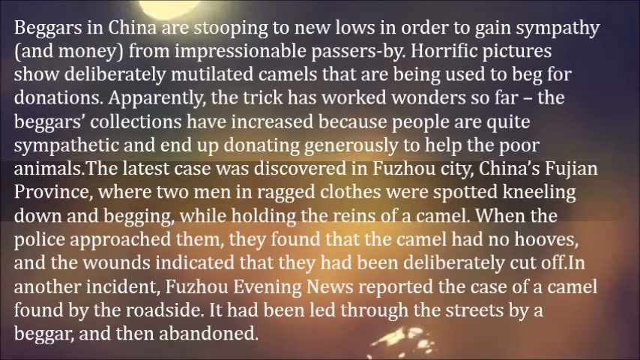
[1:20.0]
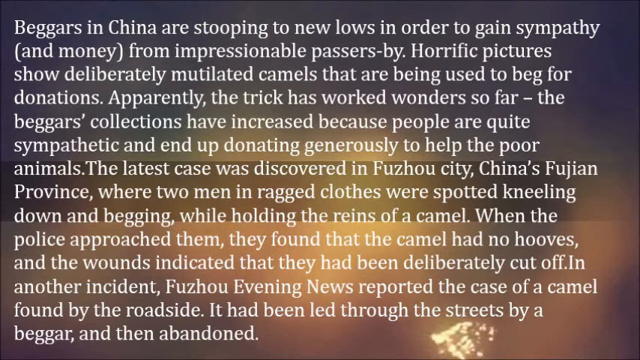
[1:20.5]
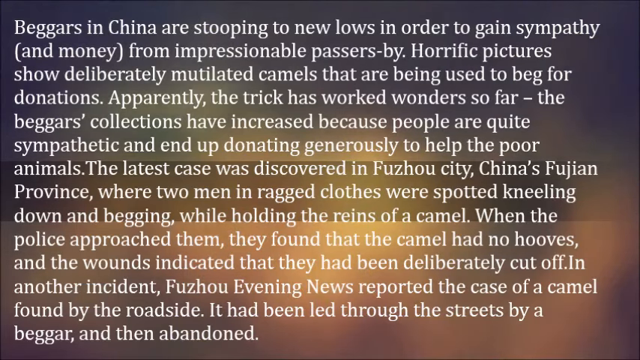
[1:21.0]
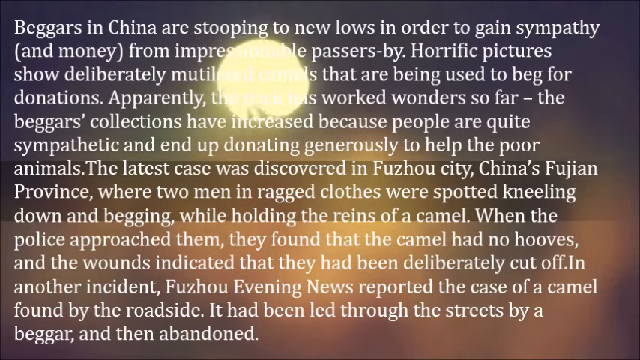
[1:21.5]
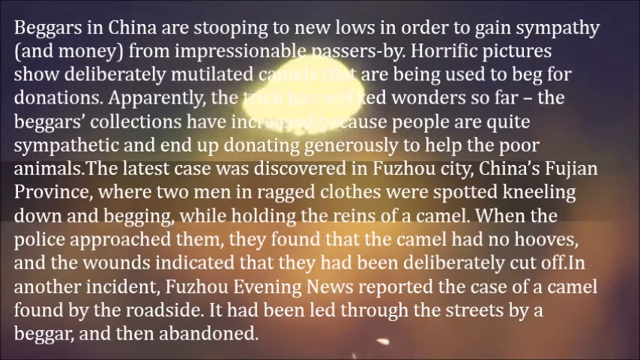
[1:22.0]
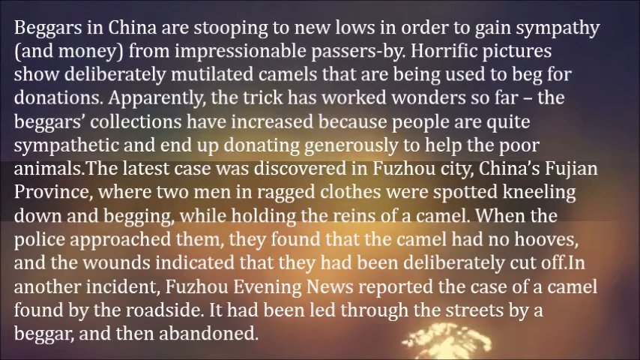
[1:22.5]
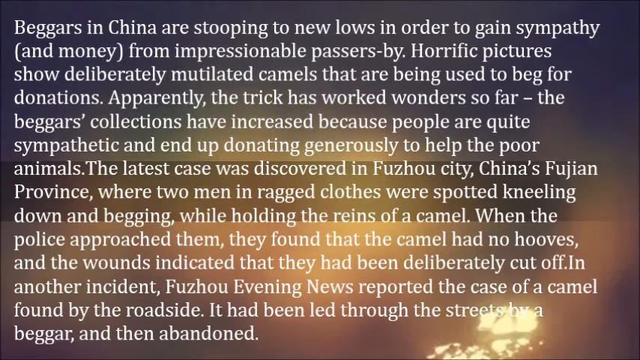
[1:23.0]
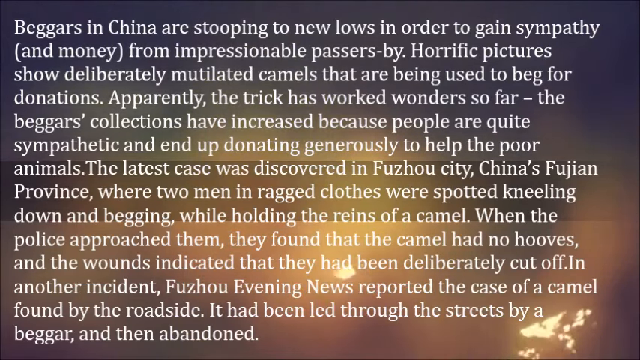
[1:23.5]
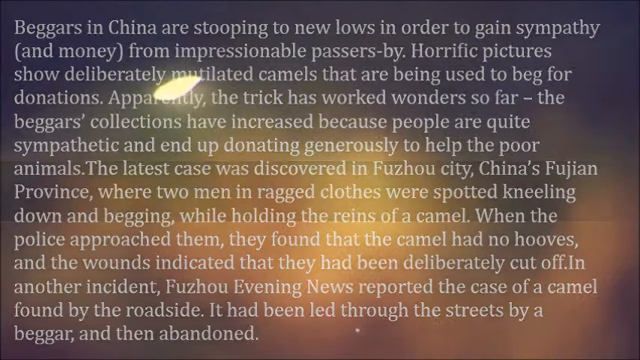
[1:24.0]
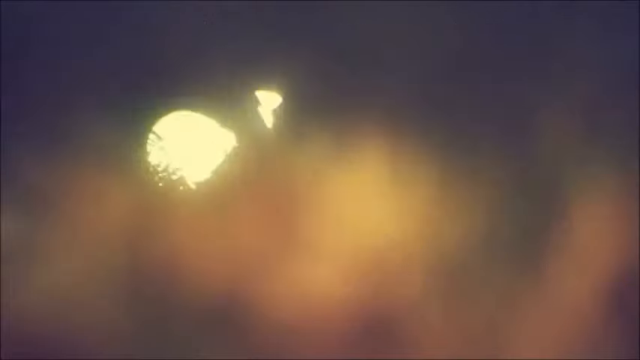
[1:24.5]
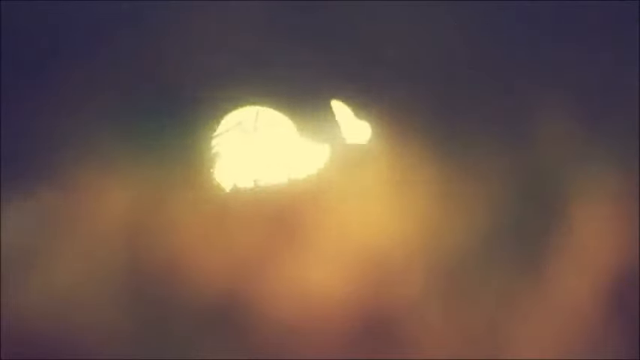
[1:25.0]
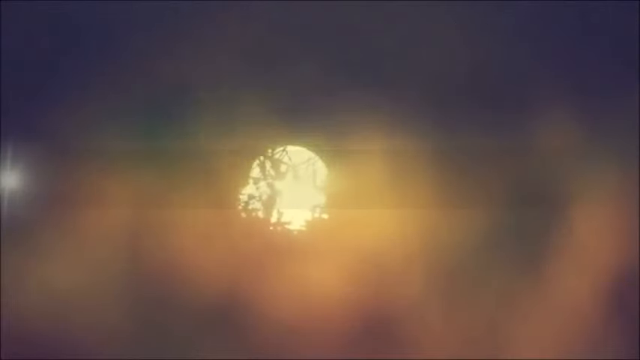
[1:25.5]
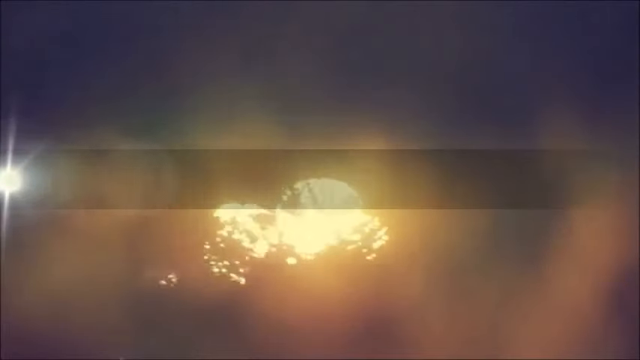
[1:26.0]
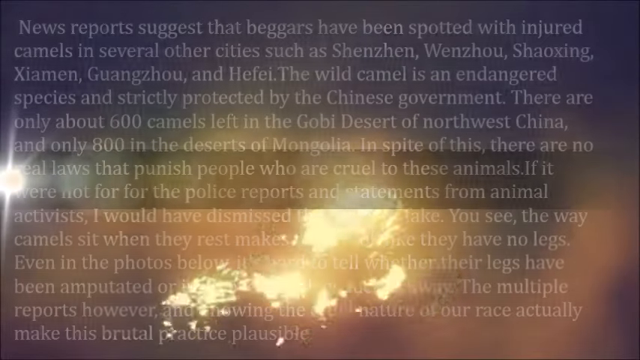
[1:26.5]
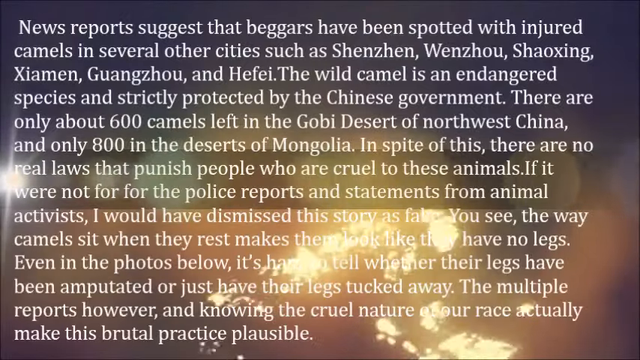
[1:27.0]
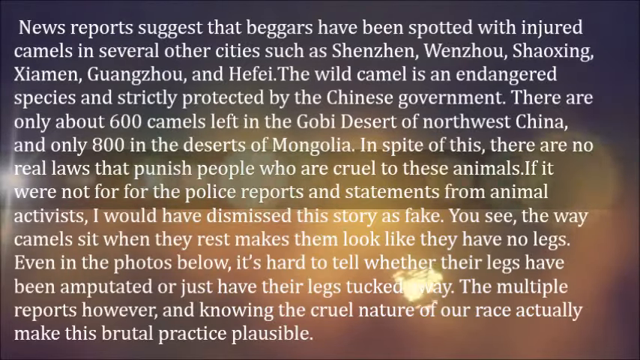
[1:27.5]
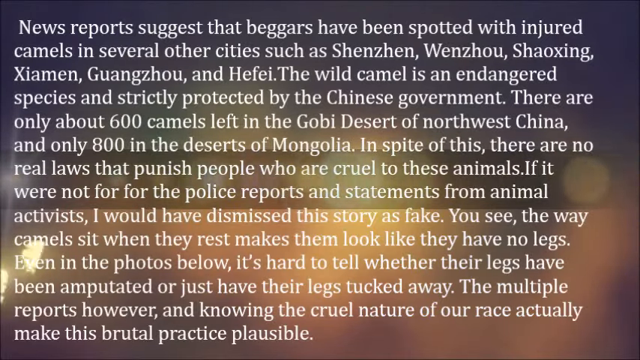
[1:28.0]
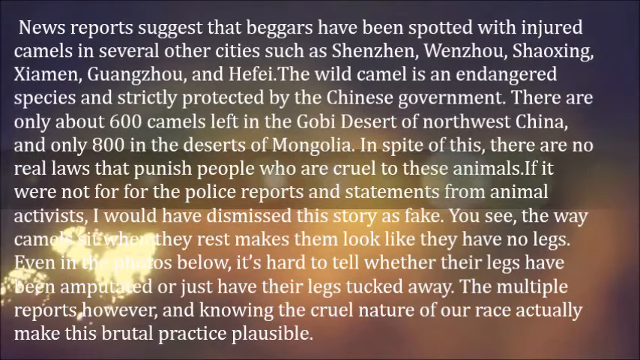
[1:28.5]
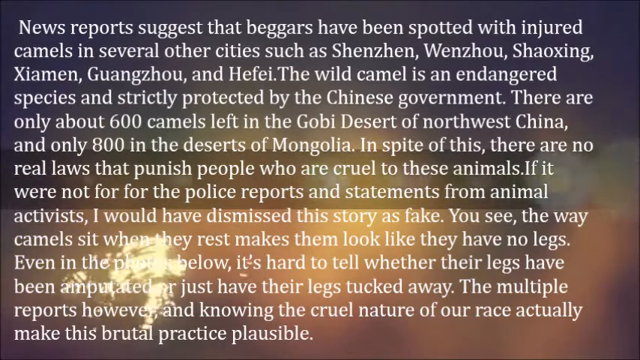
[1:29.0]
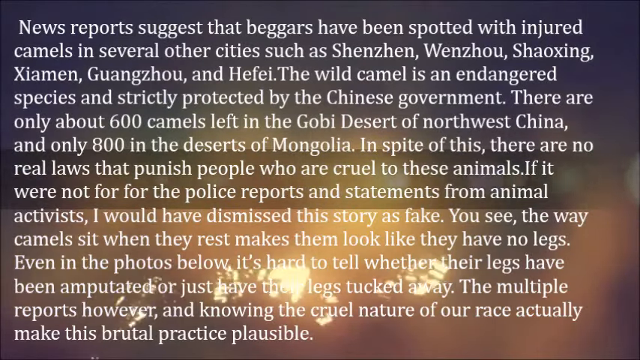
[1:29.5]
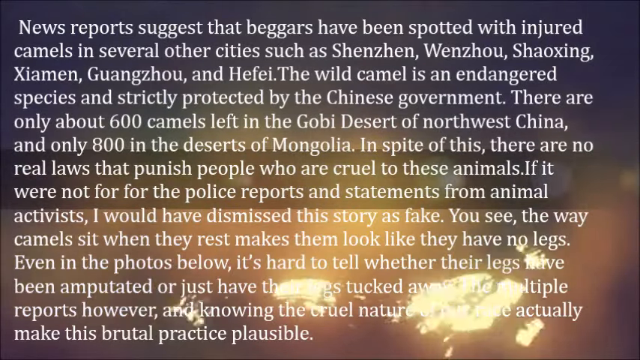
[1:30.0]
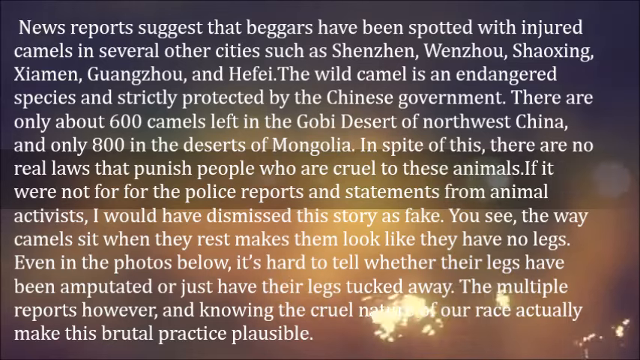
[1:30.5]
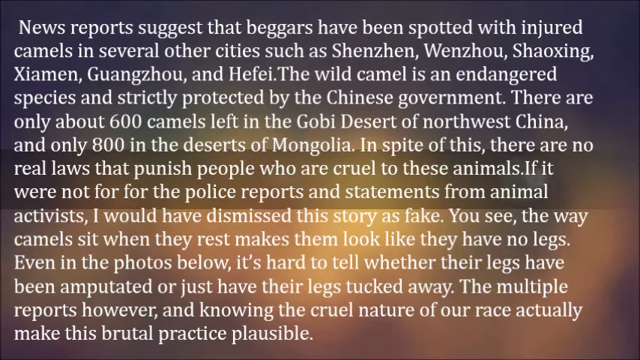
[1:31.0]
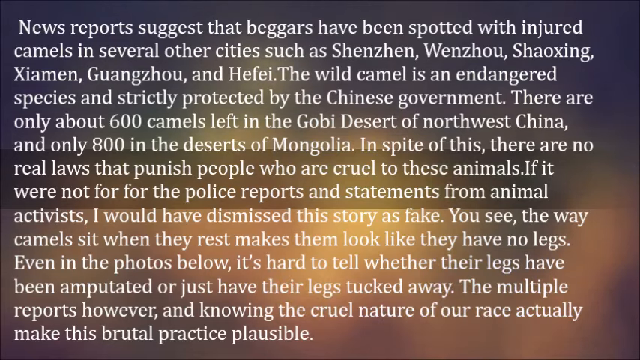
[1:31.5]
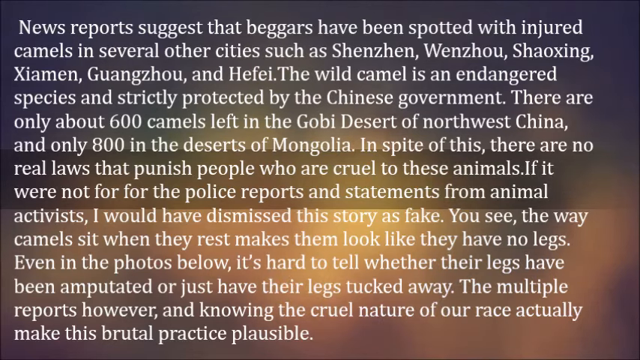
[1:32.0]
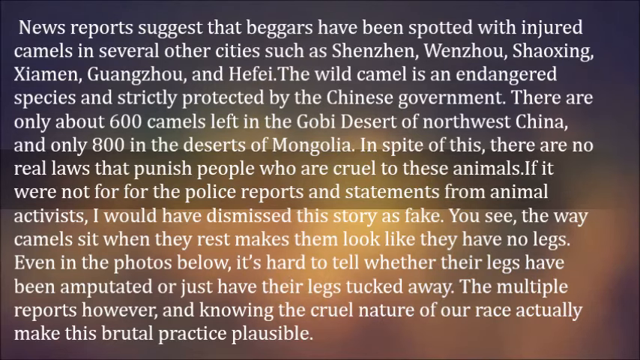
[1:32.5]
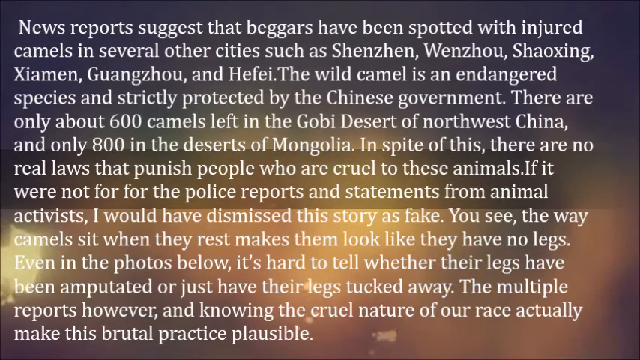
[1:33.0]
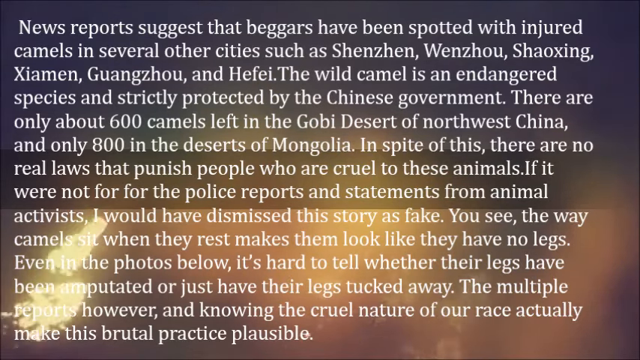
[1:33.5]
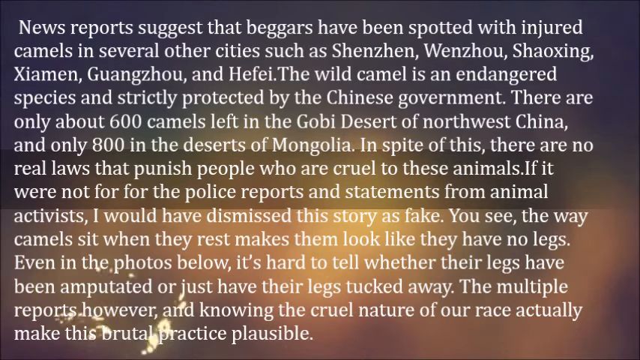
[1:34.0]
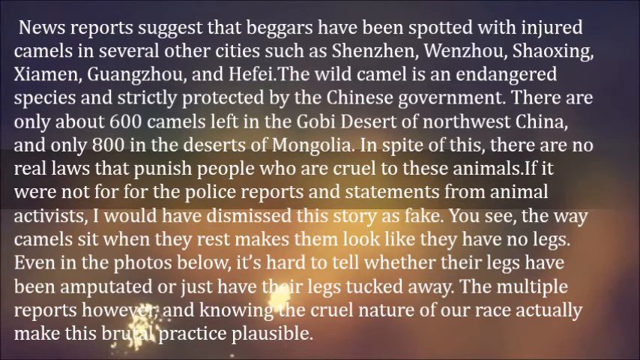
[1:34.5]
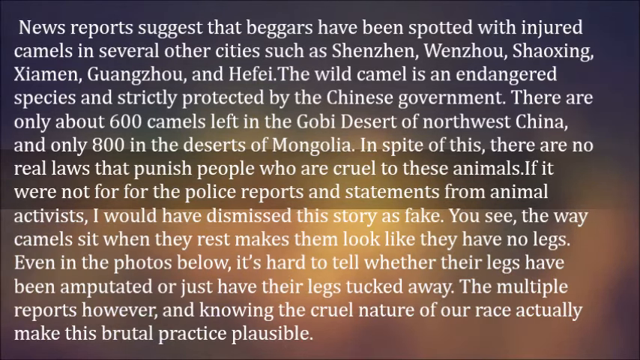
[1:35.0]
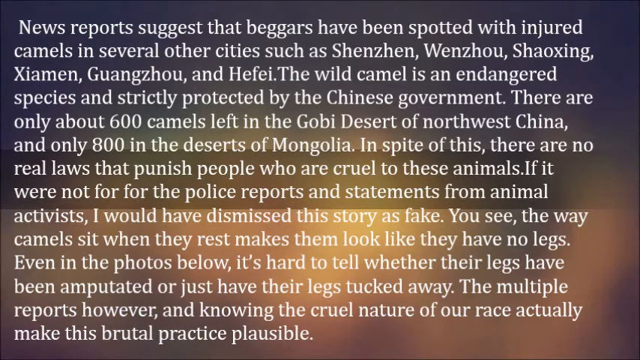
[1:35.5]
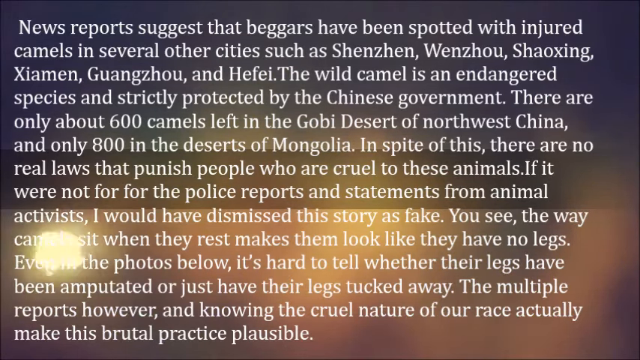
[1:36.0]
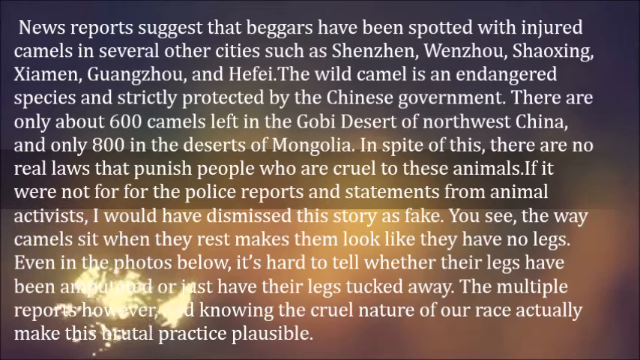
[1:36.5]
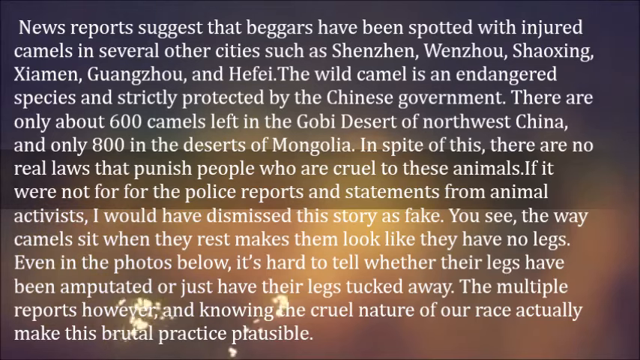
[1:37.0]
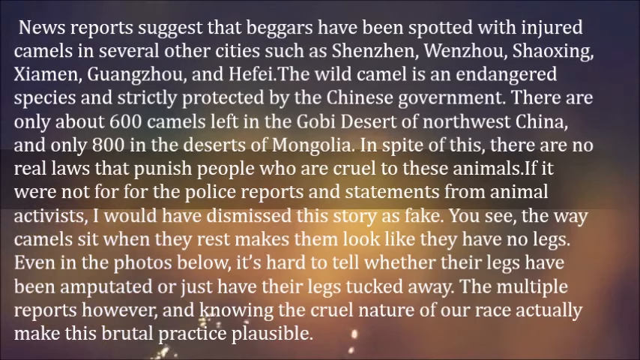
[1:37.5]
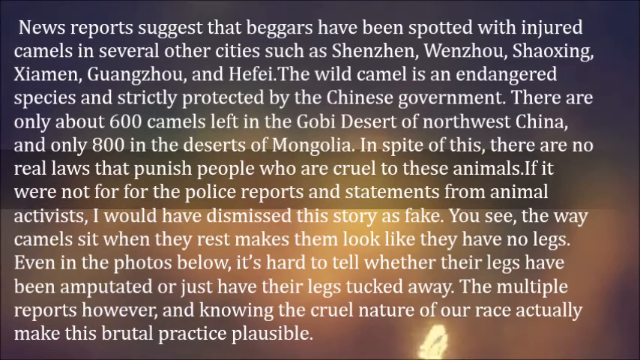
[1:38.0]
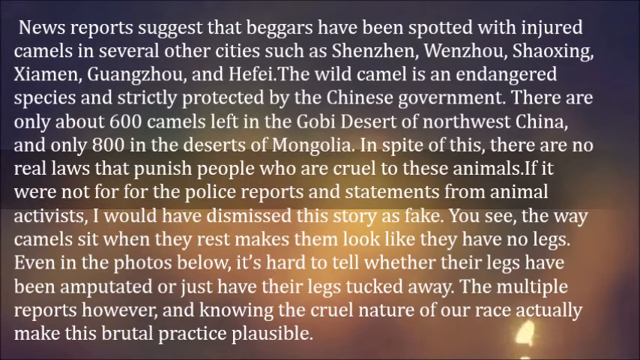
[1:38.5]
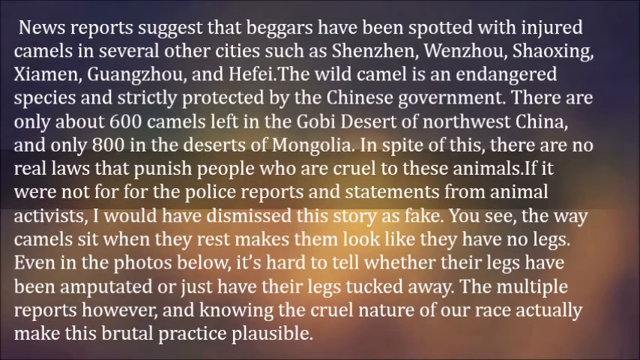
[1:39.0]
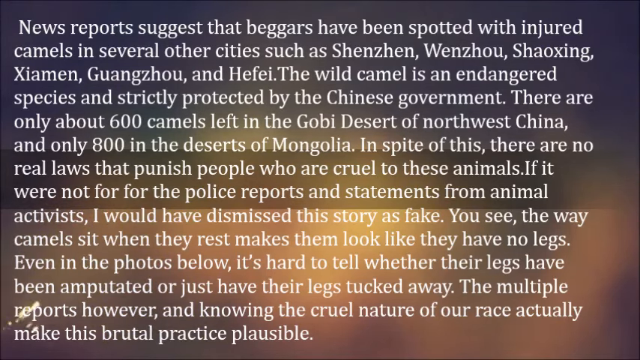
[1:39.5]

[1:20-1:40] The same words in white font are written across the screen, apparently telling the story of beggars in China deliberately mutilating camels to solicit donations, and of two beggars who were caught by the police using camels to elicit sympathy from passersby. After about five or ten seconds, the paragraph disappears, leaving only the gray, brown and black backdrop with the appearance of shimmering gold and yellow water. Eventually another paragraph pops up on the screen. It mentions that camels are endangered in northwest China, with only about 600 left in the Gobi Desert and about 800 in the deserts of Mongolia, and it questions whether the stories of the camels being mutilated are accurate, noting that it is difficult to tell whether the legs have been amputated or just tucked away underneath the camels. This very text-dense paragraph stays on the screen for the rest of the segment.